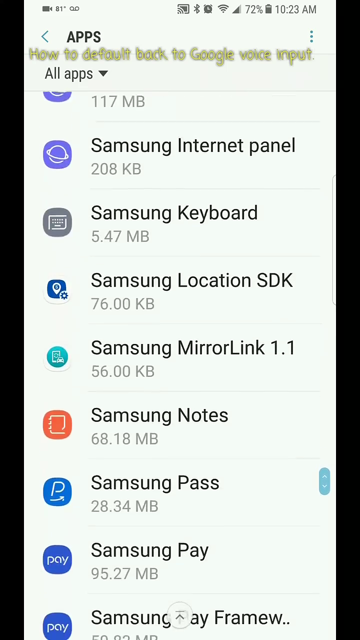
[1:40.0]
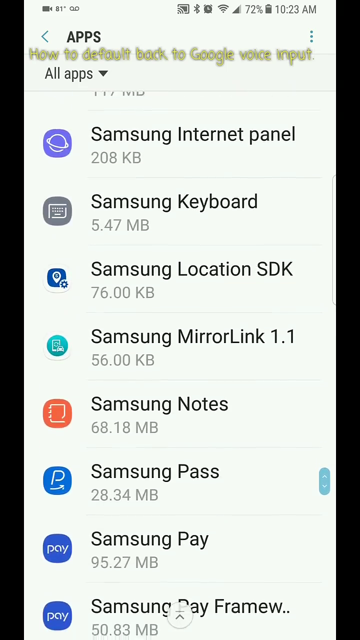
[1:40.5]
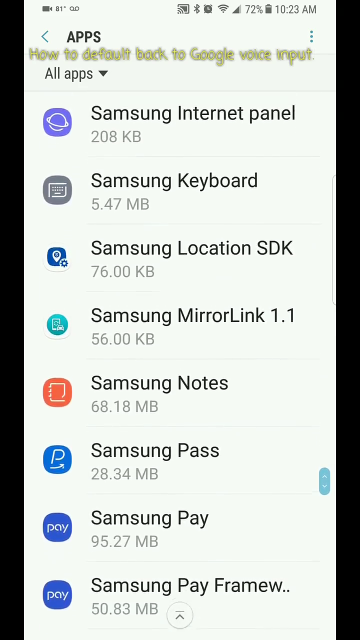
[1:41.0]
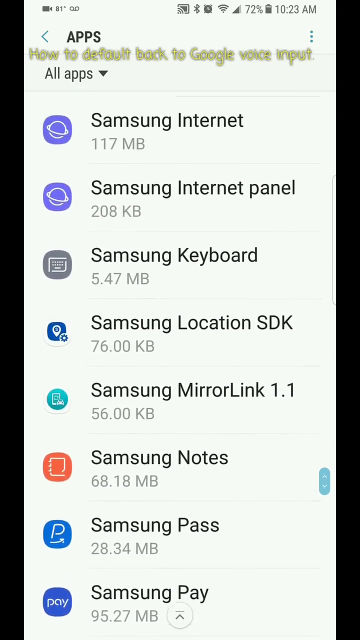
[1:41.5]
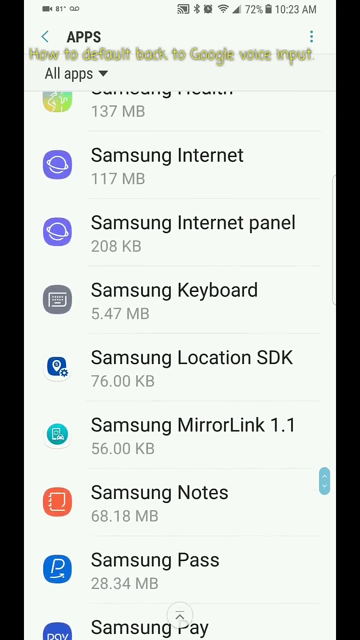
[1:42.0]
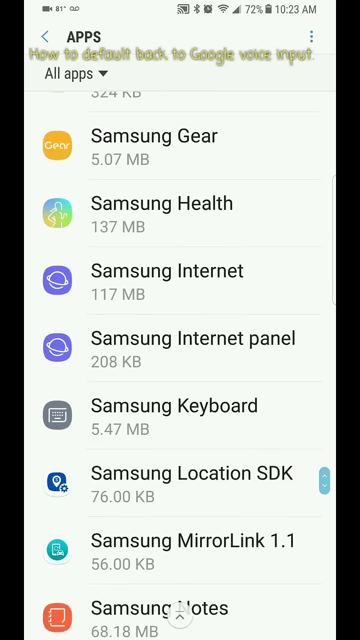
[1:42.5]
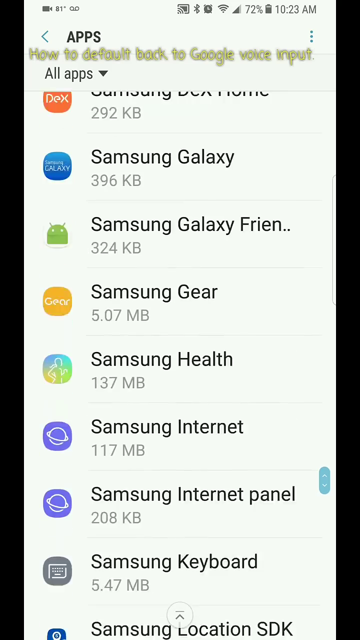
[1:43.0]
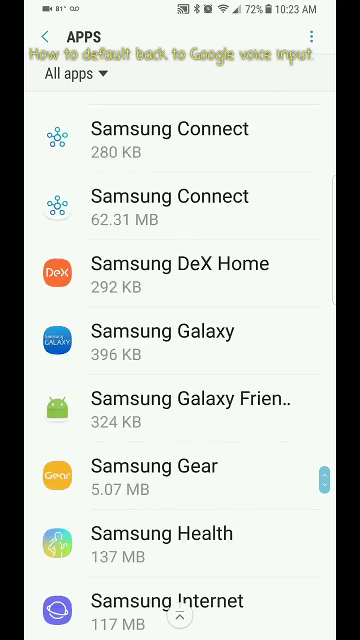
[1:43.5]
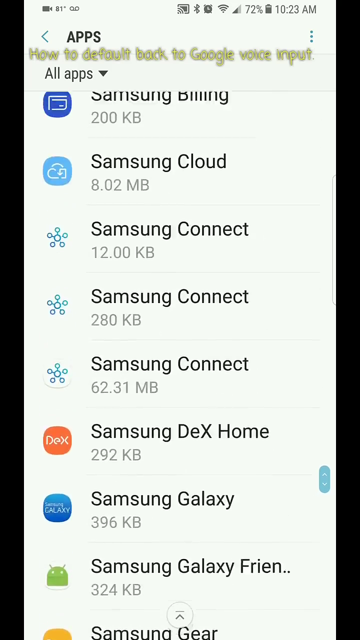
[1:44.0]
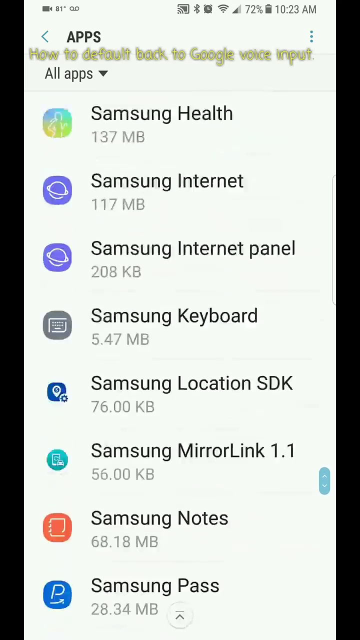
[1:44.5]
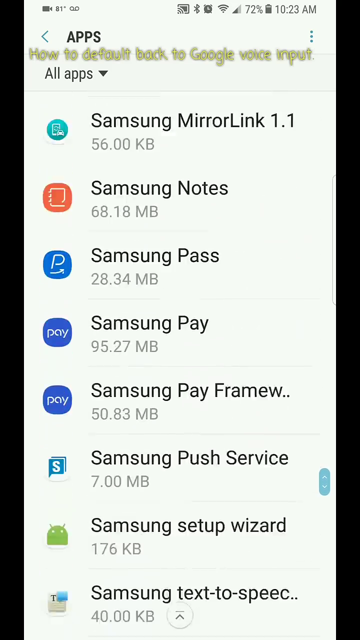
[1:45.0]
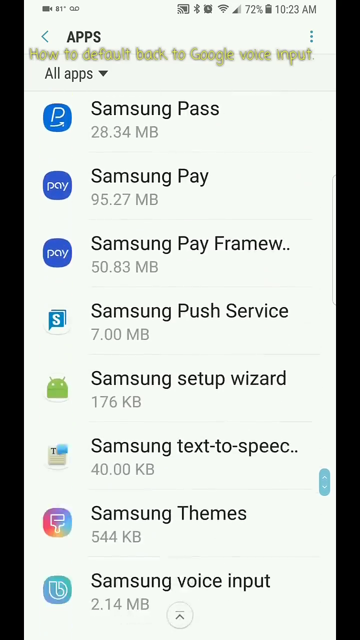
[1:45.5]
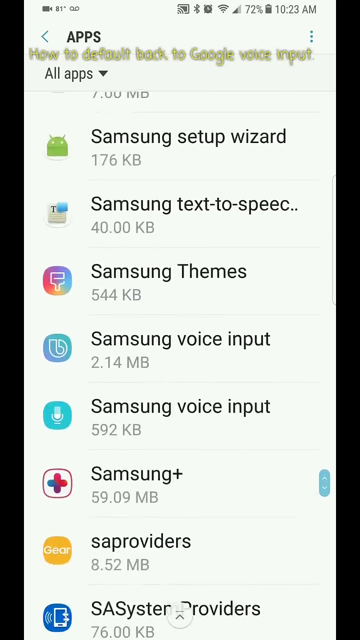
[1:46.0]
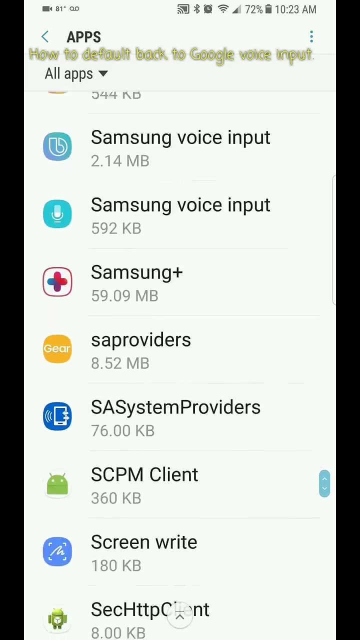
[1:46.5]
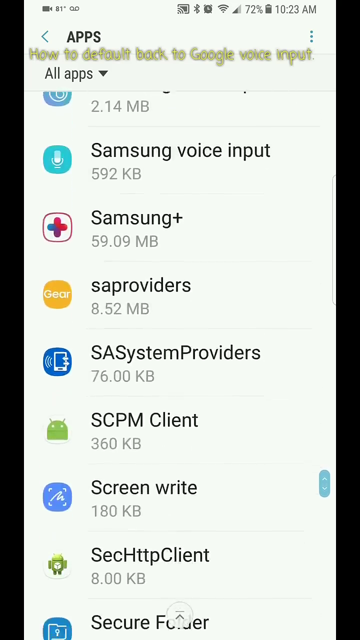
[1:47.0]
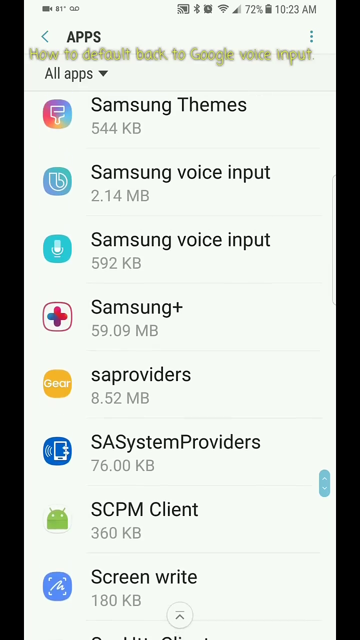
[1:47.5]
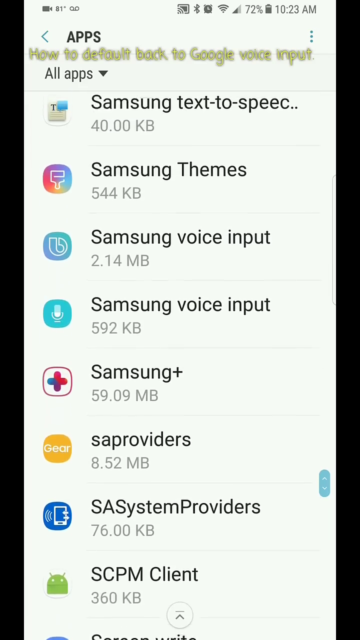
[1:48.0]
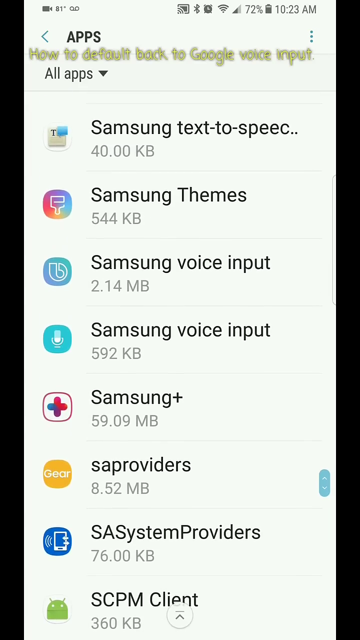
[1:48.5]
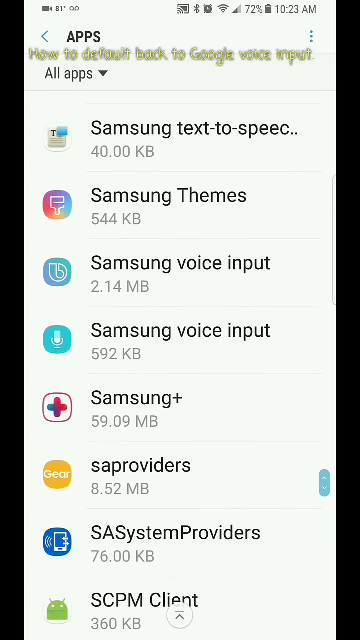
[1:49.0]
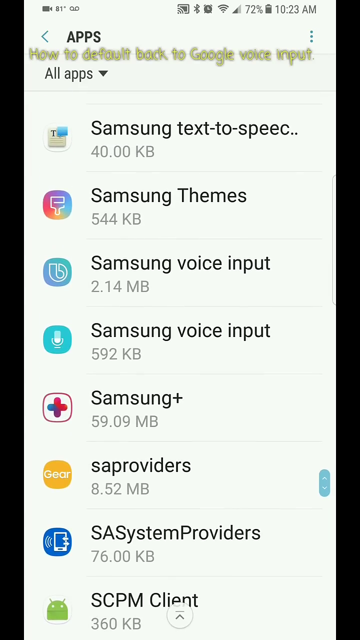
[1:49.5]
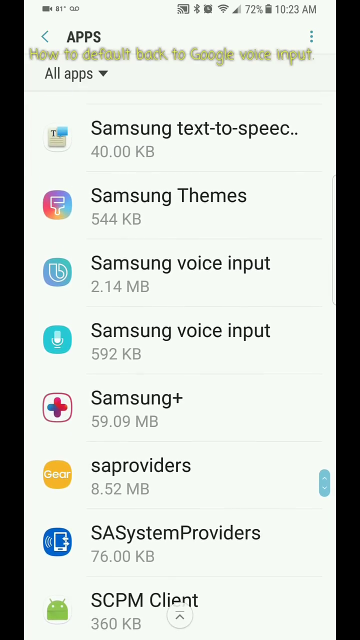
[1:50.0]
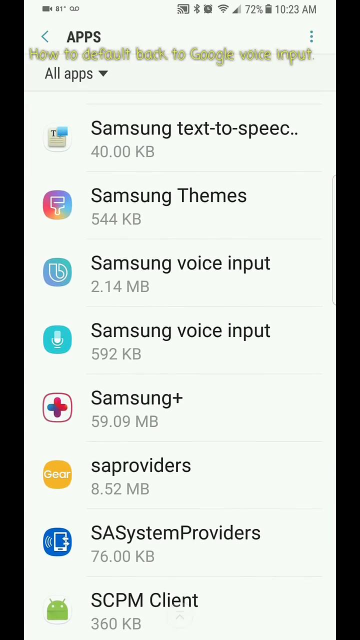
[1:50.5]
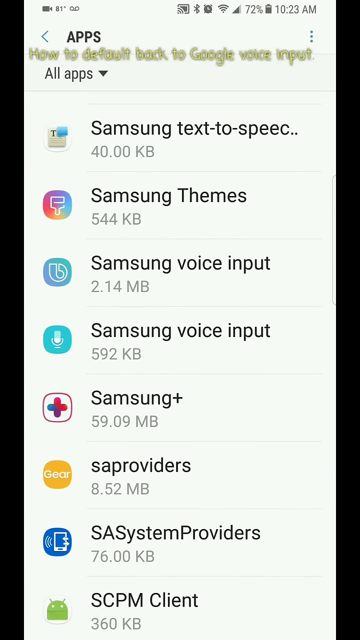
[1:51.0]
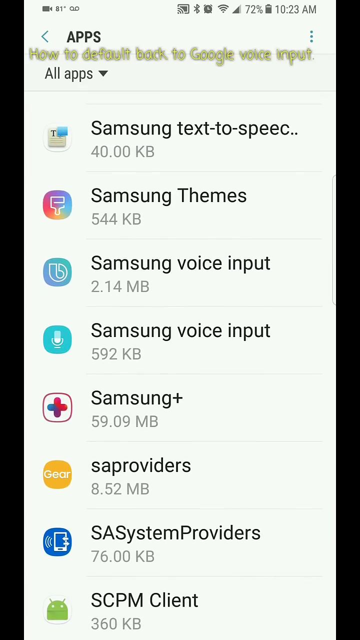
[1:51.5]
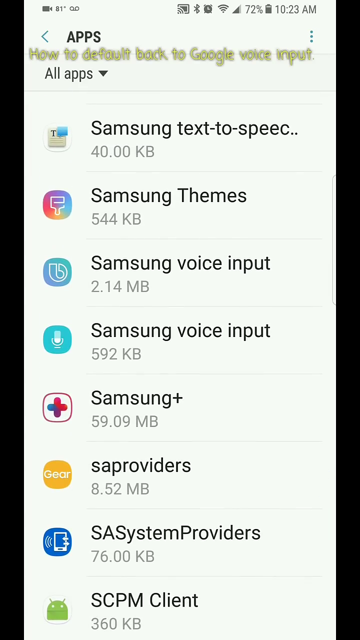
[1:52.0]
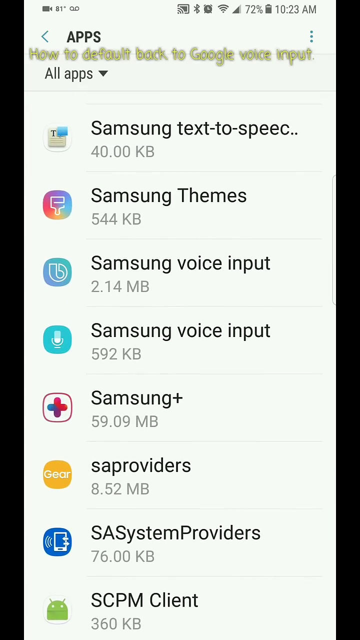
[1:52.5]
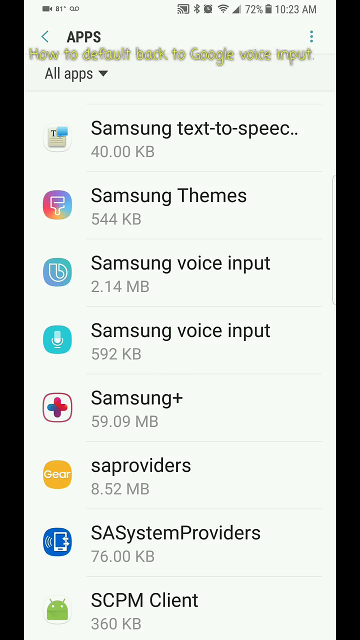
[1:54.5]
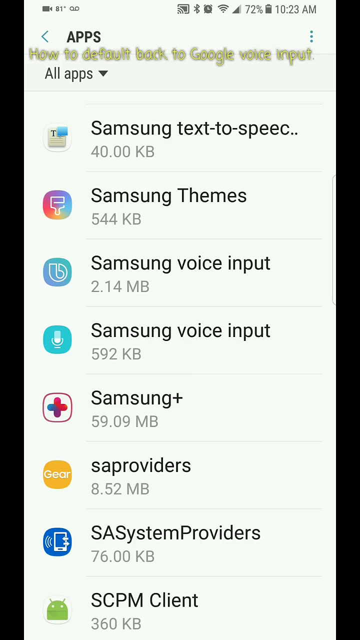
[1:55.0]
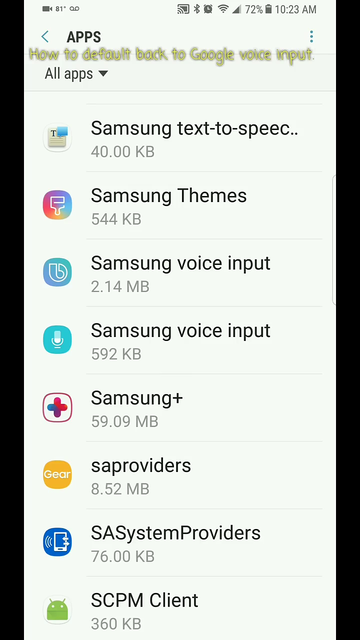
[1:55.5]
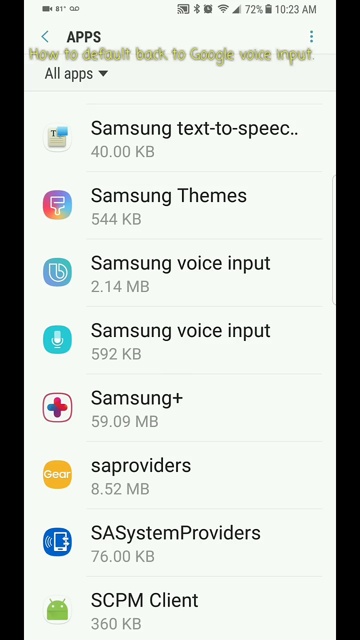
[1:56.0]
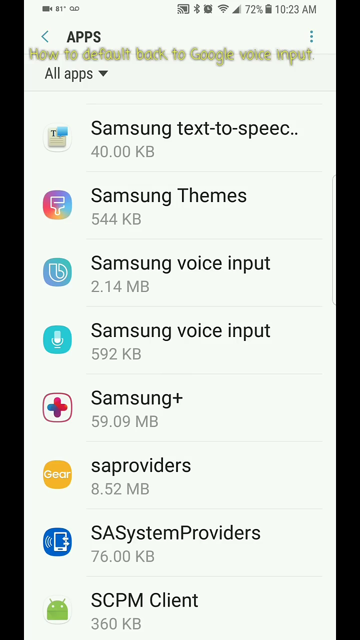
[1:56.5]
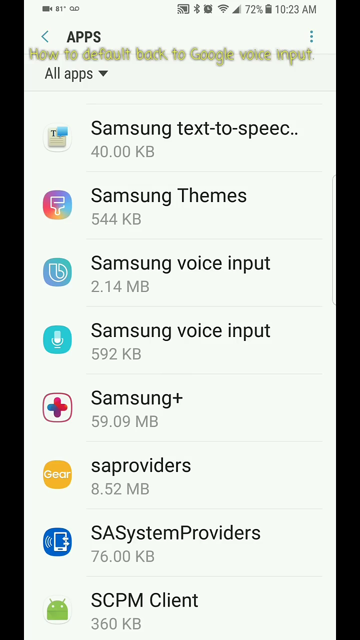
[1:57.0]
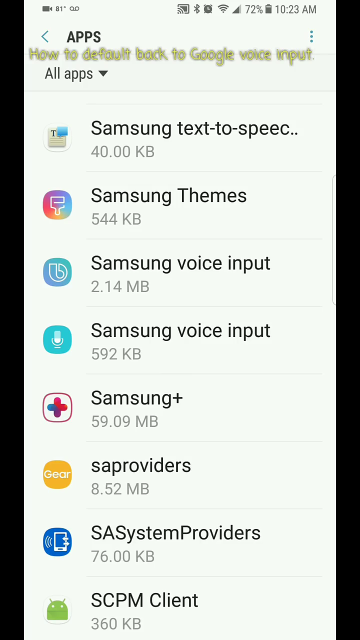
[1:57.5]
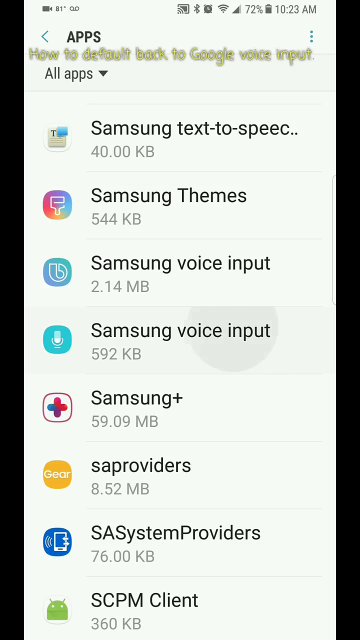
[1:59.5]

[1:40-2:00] The scrolling slows and goes back and forth among the Samsung apps, moves up a bit, then speeds up between the SA, Samsung, and SAP entries. When the scrolling stops, the other element disappears. At the top, beneath the how-to text, "all apps" appears on the right with a drop-down arrow. The battery is at 72% and the time is 10 23 a.m. At the very top, in gray, are a Bluetooth icon, a set alarm clock, and Wi-Fi. The Samsung apps have blue and orange icons, the keyboard app is gray, and there is an internet panel; the only uncolored elements are the text, such as the sizes and app titles.